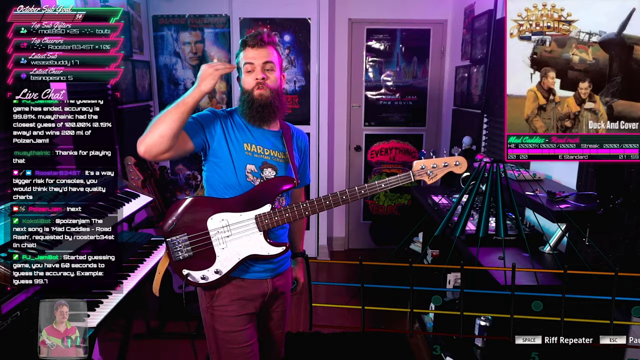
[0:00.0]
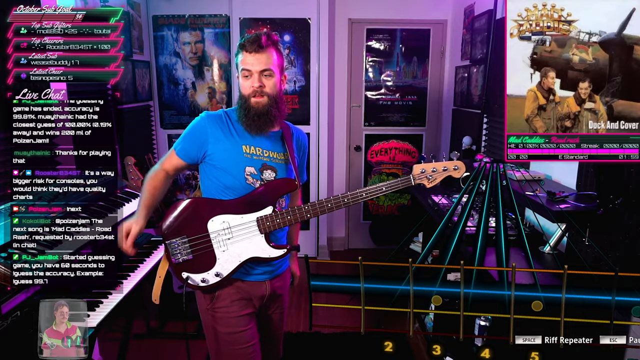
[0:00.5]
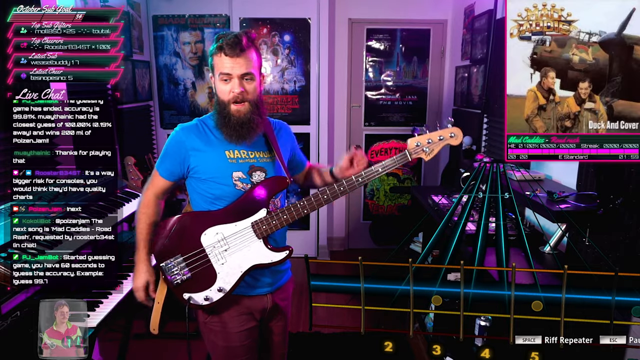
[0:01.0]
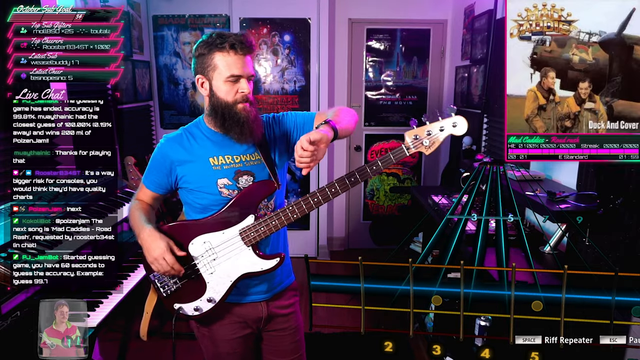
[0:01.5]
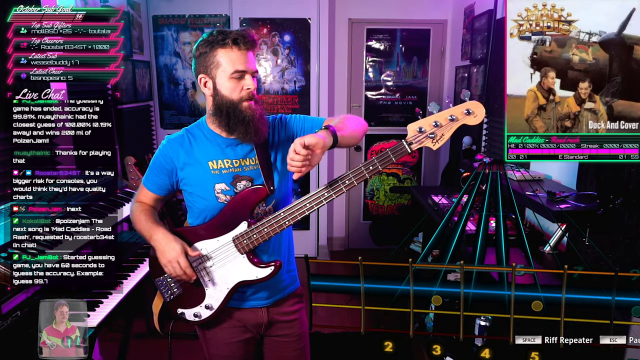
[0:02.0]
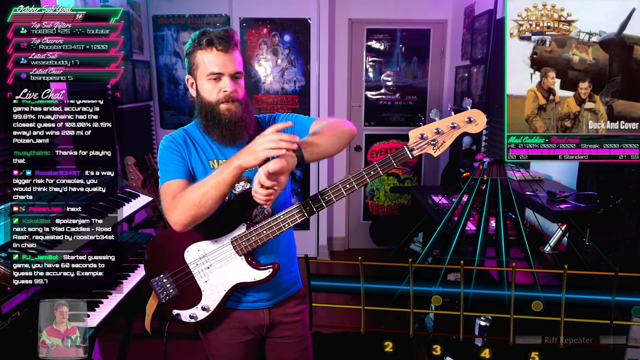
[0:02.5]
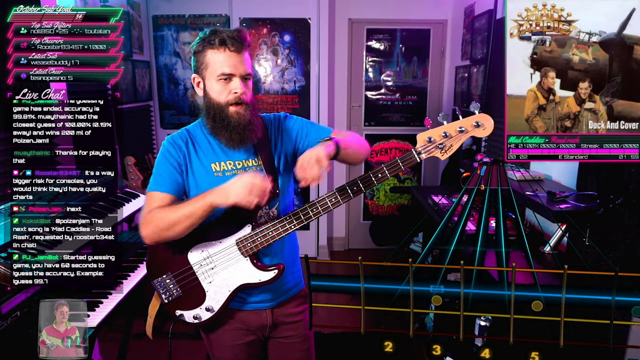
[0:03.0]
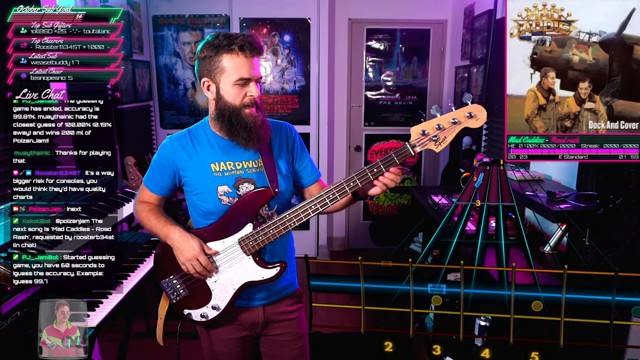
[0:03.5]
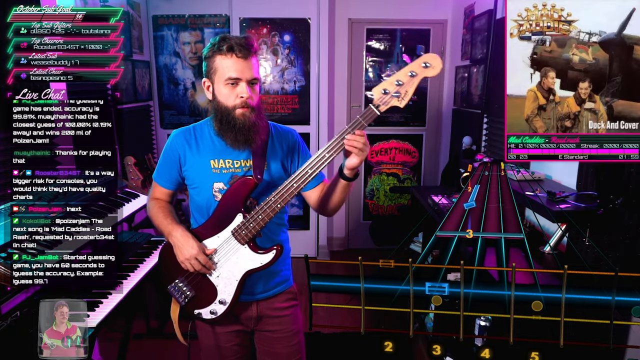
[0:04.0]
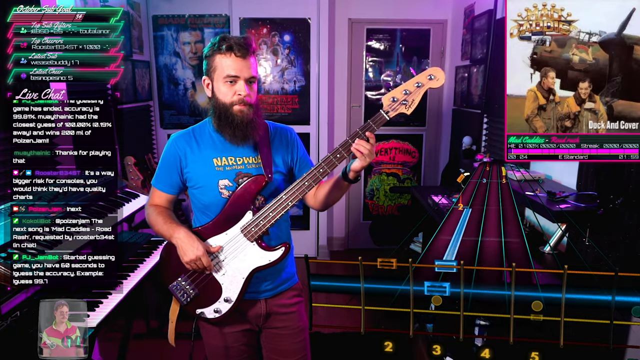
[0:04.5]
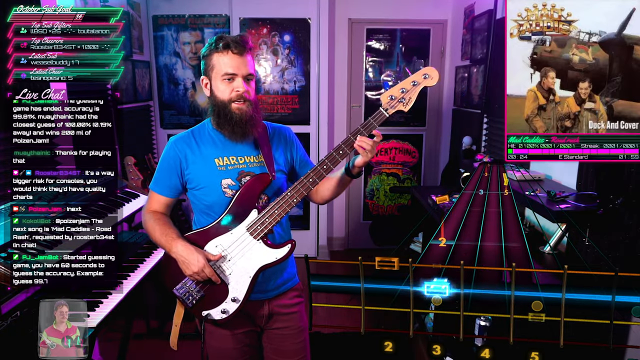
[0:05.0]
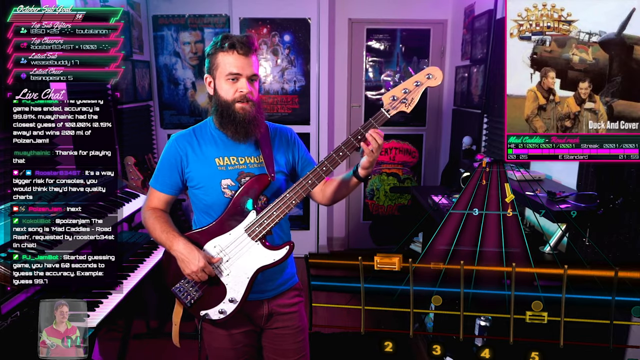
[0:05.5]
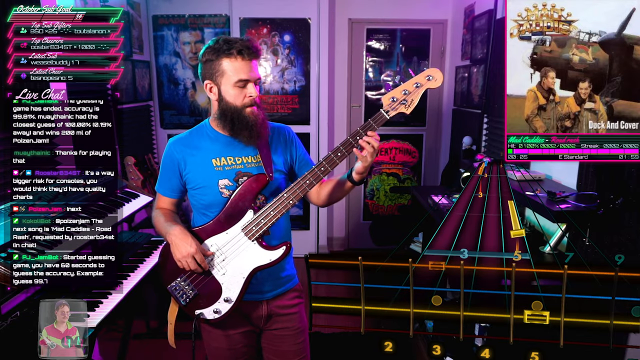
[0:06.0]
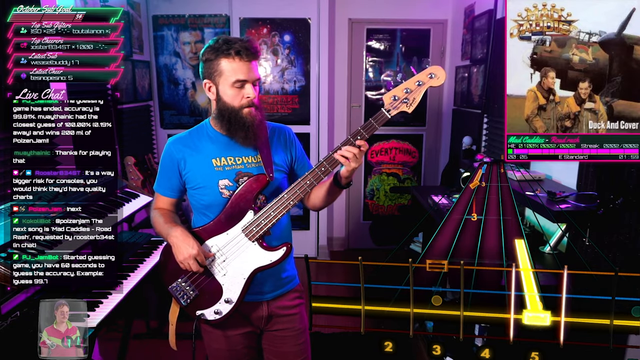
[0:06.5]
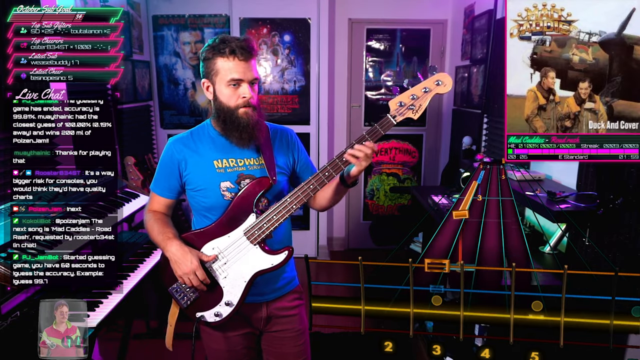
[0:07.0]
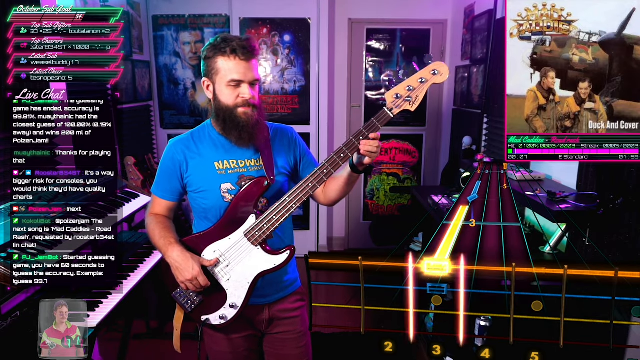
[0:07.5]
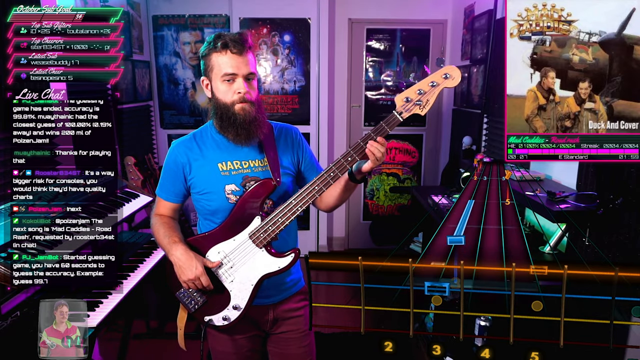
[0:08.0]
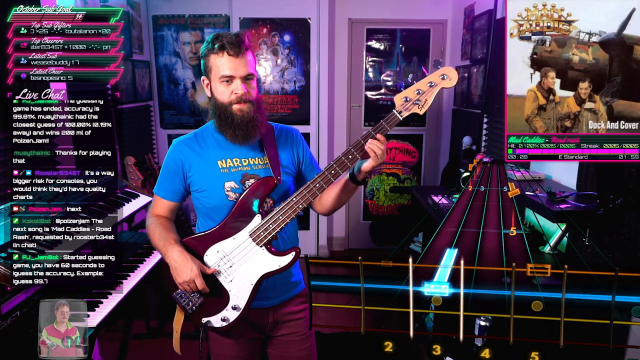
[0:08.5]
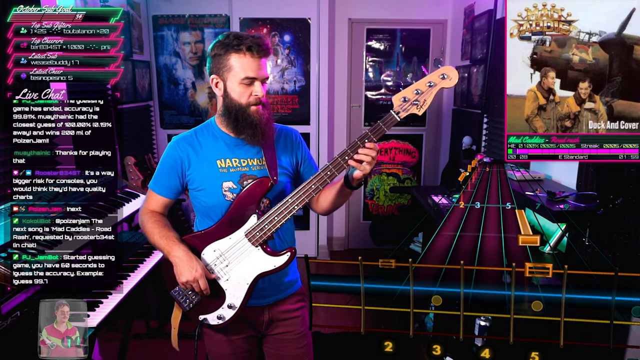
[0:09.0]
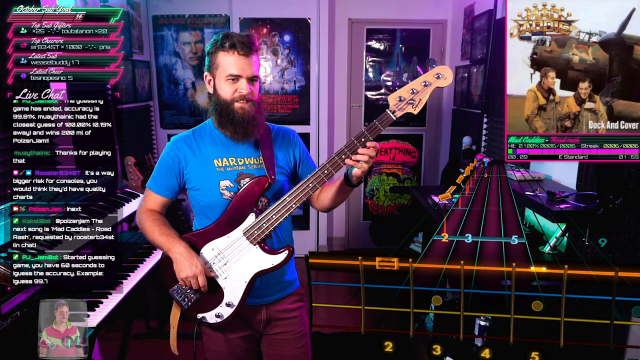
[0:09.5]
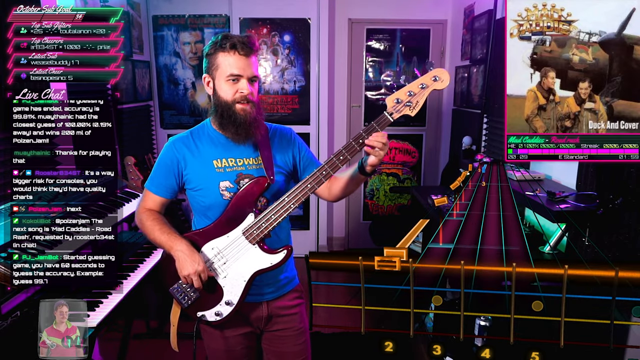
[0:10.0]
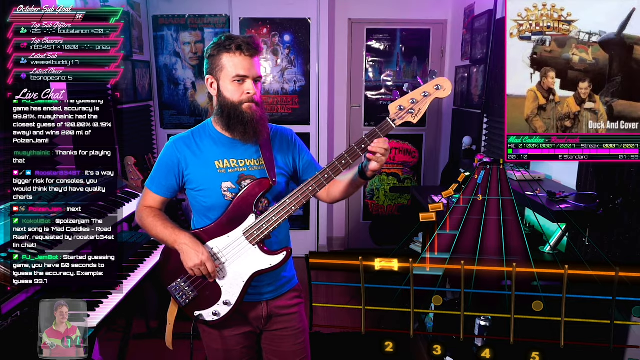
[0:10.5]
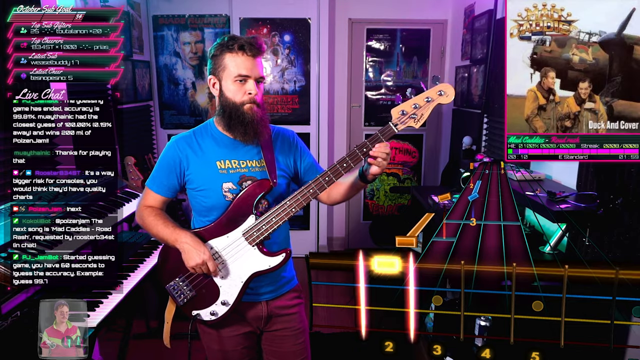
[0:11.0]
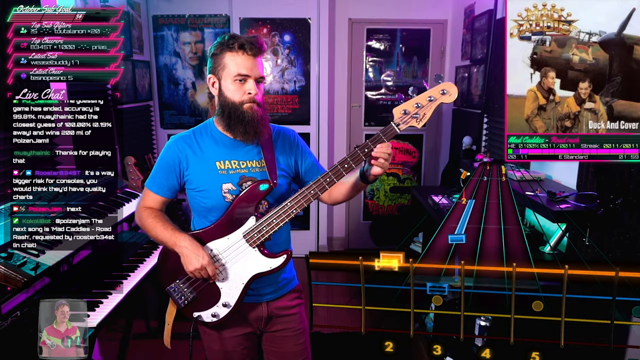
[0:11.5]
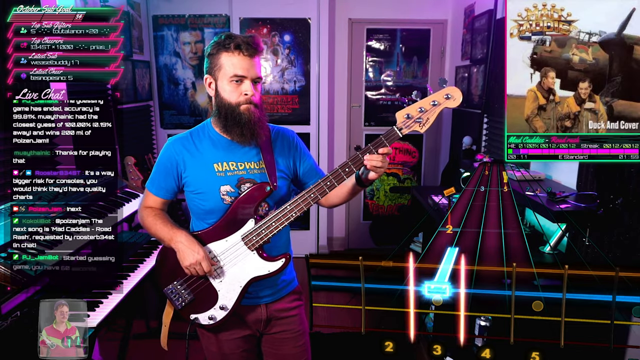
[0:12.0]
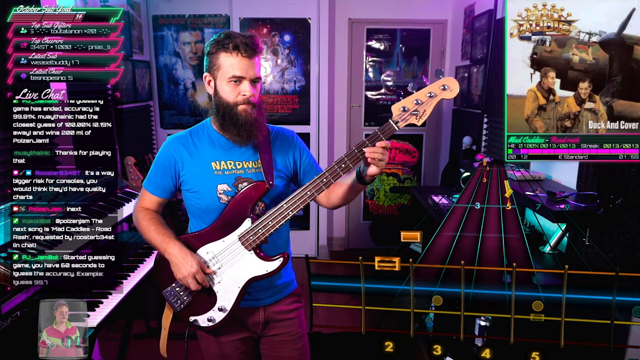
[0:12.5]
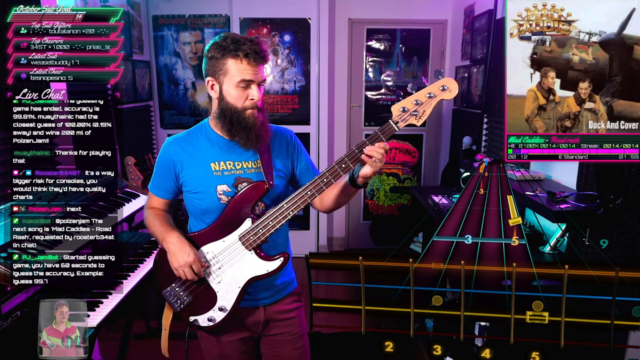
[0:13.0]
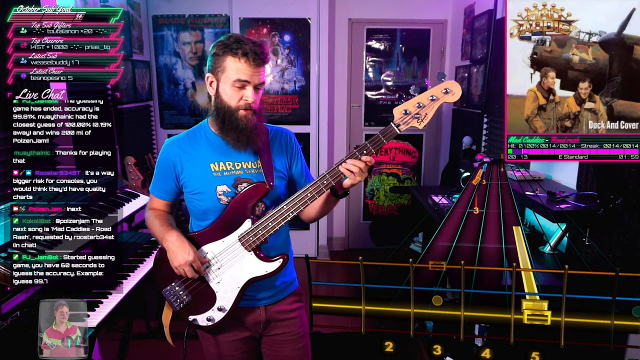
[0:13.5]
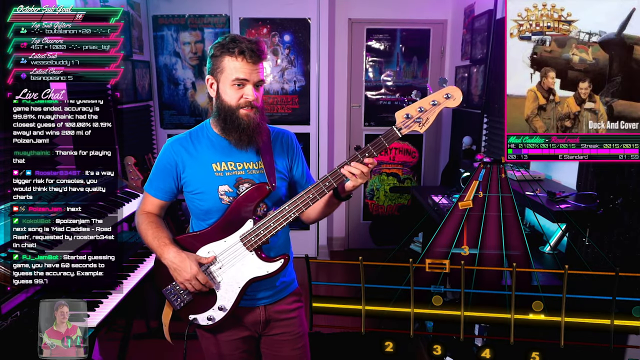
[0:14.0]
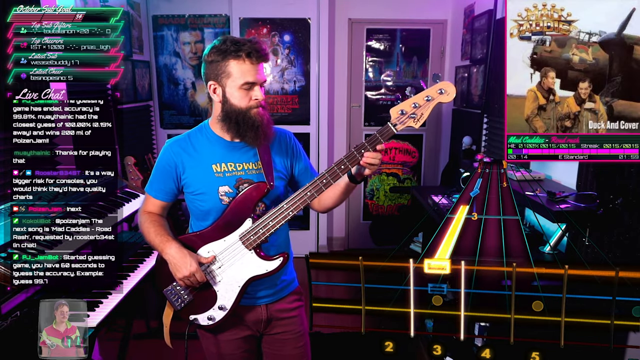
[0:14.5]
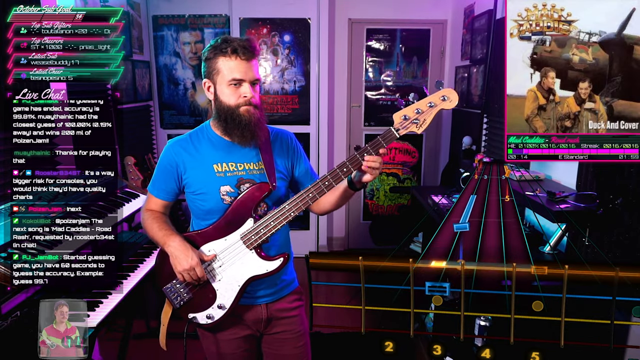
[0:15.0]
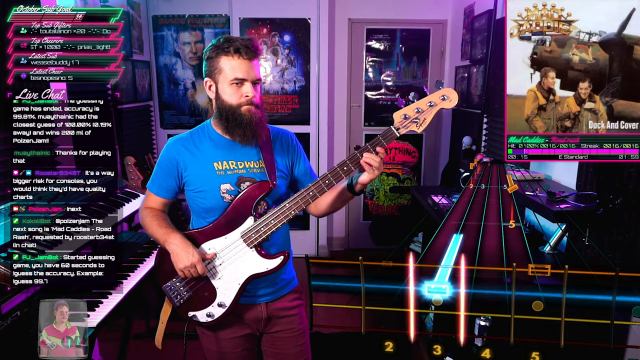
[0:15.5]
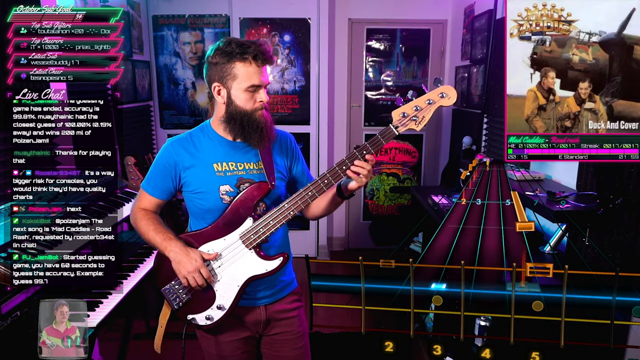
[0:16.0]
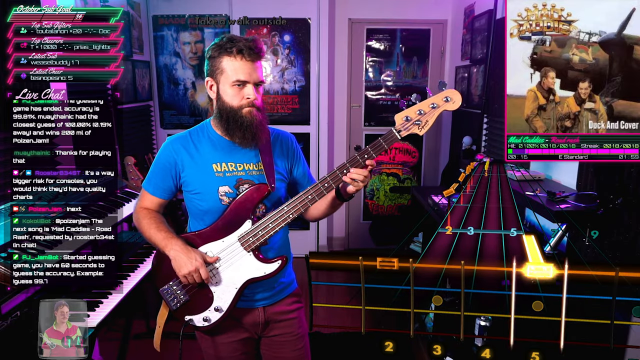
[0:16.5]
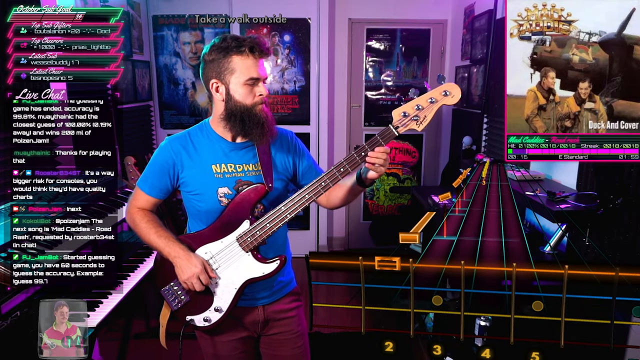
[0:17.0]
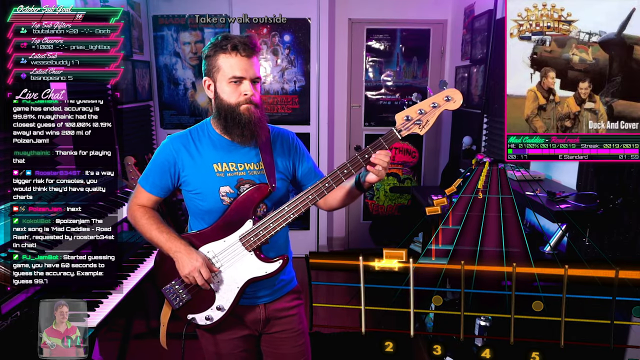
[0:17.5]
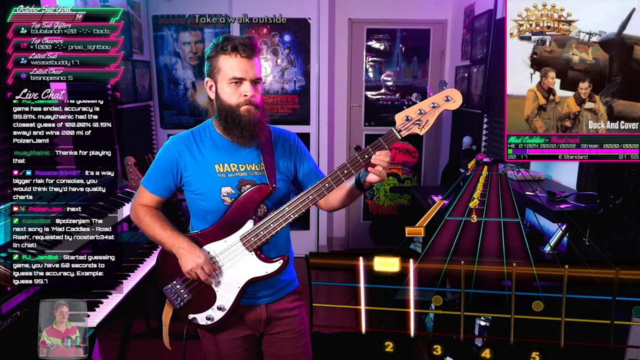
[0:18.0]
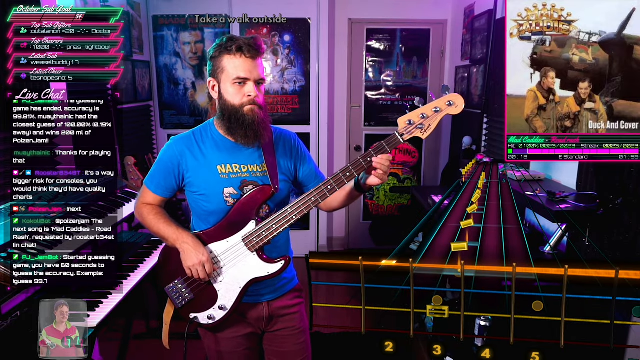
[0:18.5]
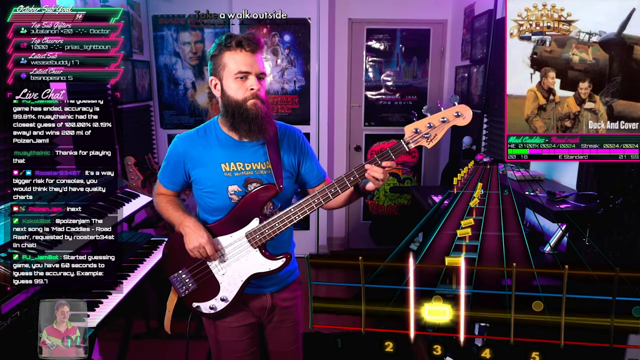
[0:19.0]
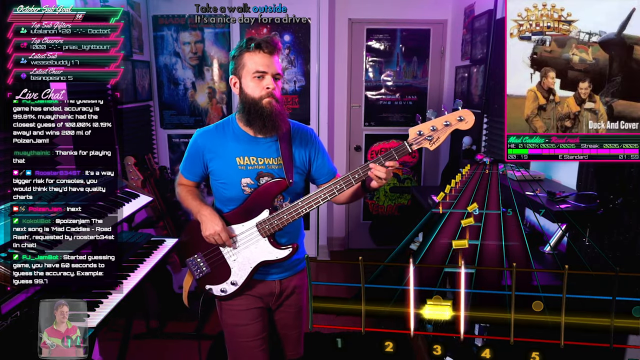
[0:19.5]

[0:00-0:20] A man, apparently in his 30s, plays guitar on what looks like a streaming platform, with chats on the left-hand side of the screen labeled "live chat" and different users apparently making statements about what he is playing. A guitar is in the background along with a bunch of movie posters, and the lighting is in neon colors. In the upper right-hand corner, the screen shows that he is doing a cover of Duck and Cover. There is a title in fuchsia neon colors that is hard to see, possibly reading "Mad Cadillac." In the bottom right-hand corner of the video, to his right, there is an animation of him hitting notes, suggesting it may be a guitar game like Guitar Hero.